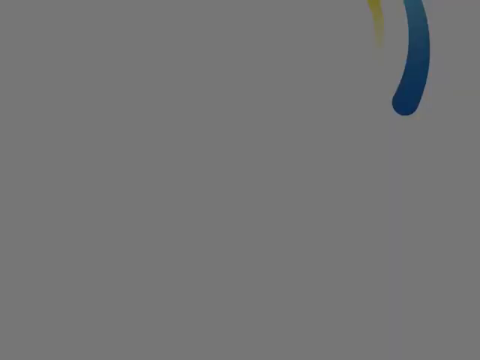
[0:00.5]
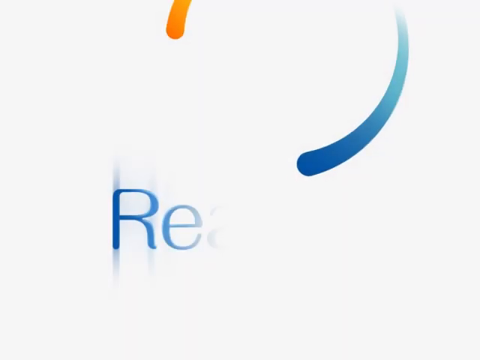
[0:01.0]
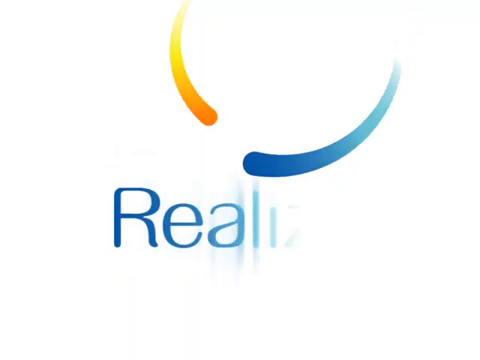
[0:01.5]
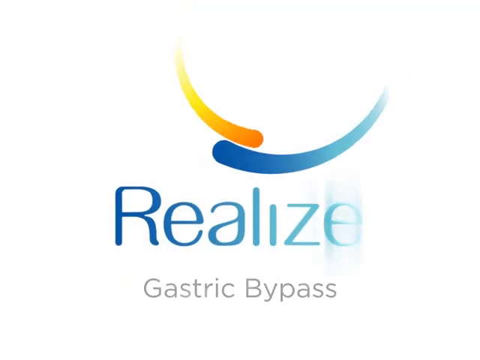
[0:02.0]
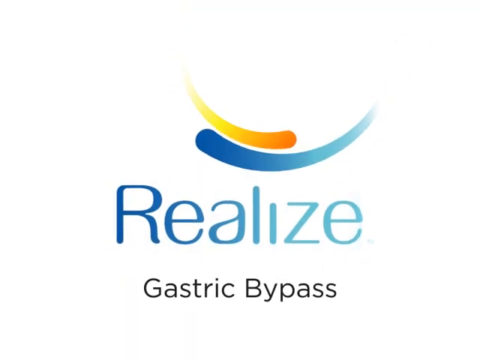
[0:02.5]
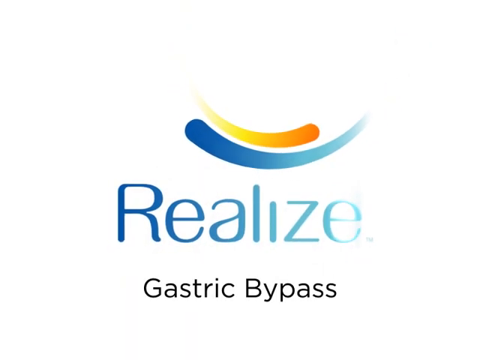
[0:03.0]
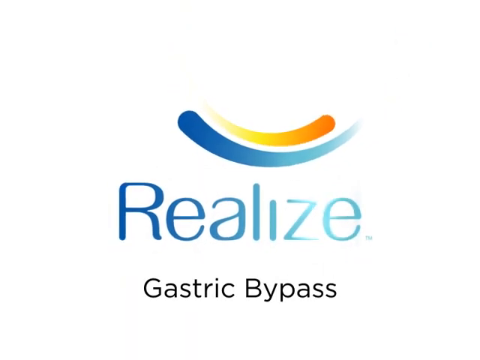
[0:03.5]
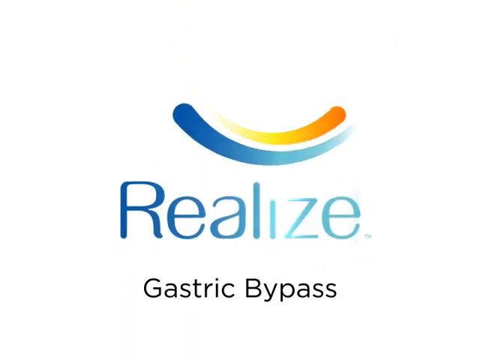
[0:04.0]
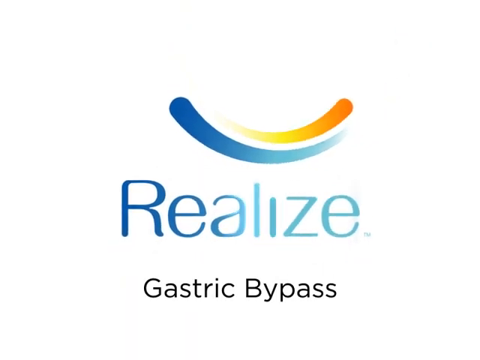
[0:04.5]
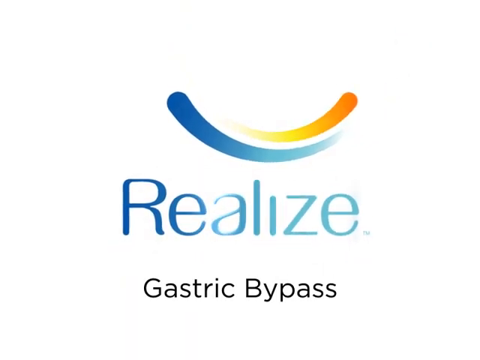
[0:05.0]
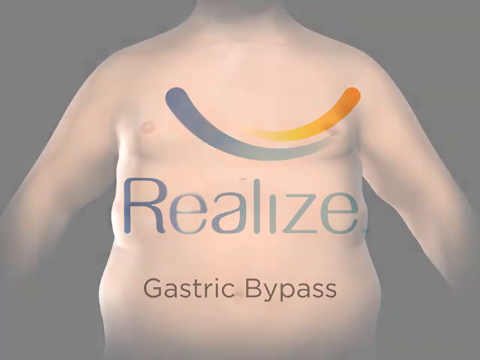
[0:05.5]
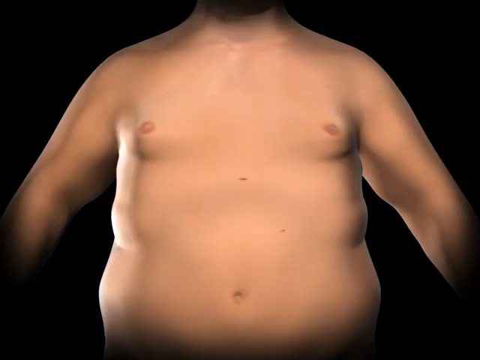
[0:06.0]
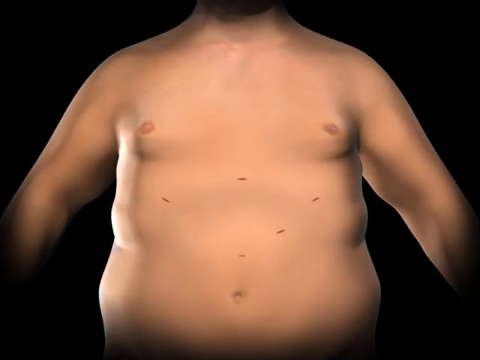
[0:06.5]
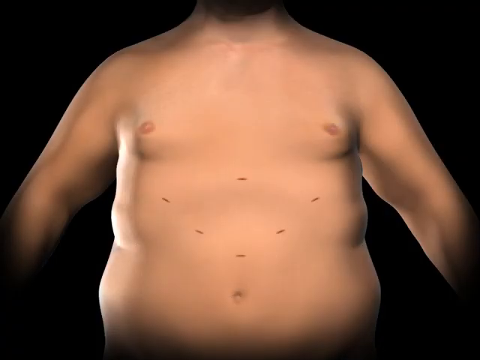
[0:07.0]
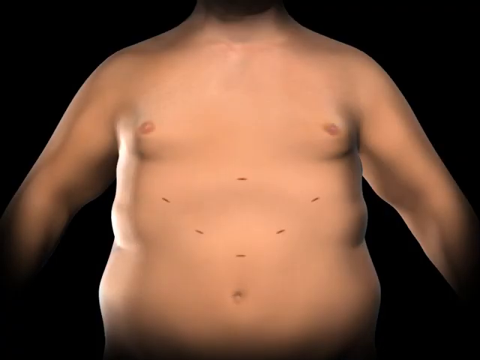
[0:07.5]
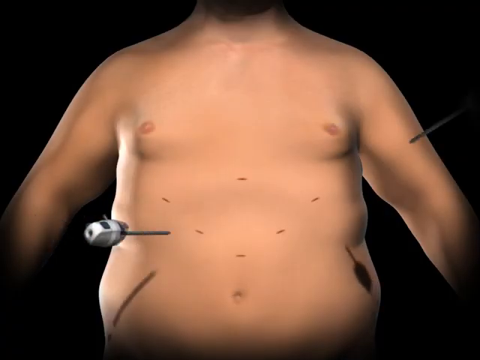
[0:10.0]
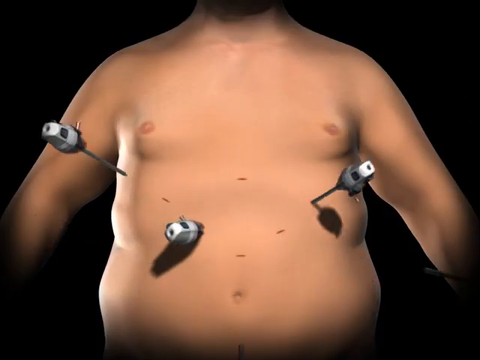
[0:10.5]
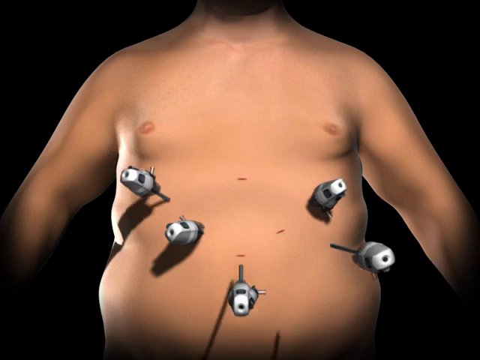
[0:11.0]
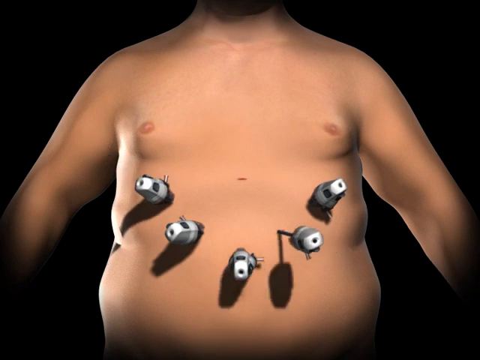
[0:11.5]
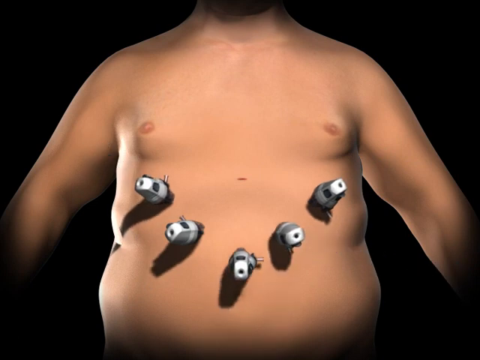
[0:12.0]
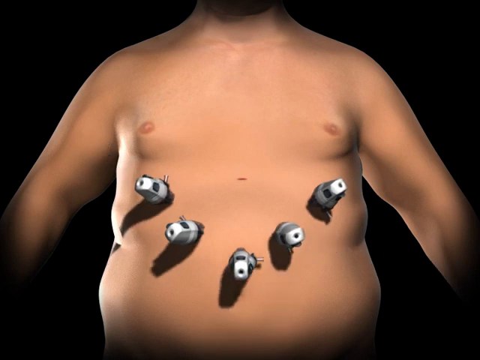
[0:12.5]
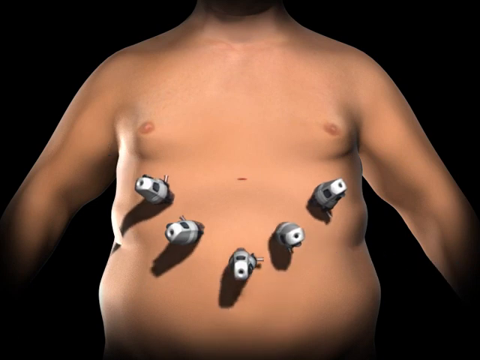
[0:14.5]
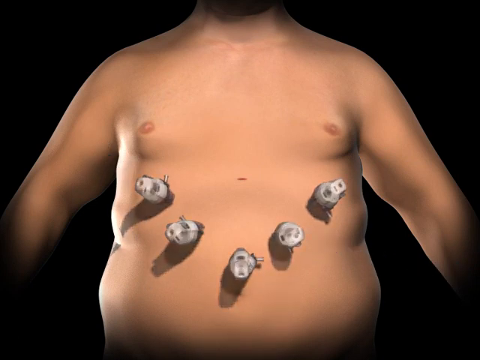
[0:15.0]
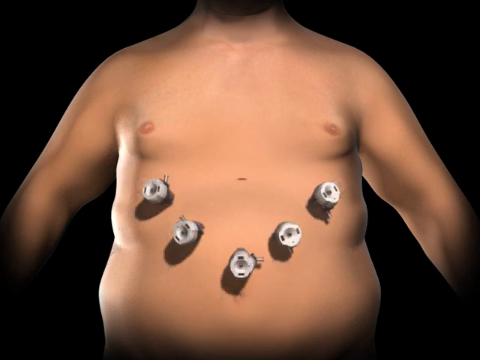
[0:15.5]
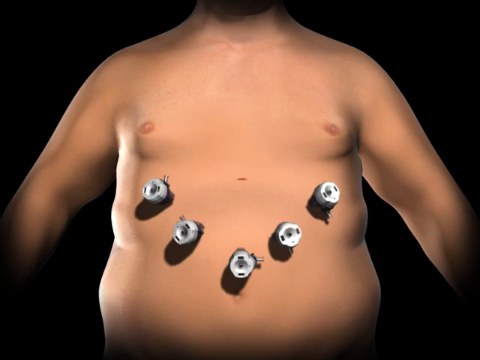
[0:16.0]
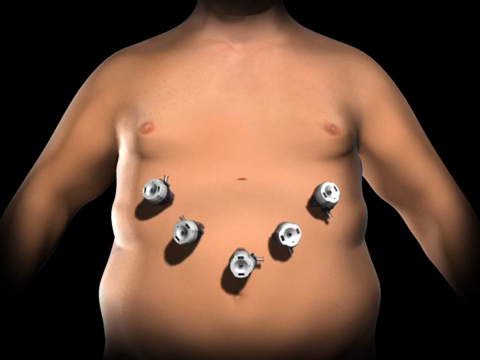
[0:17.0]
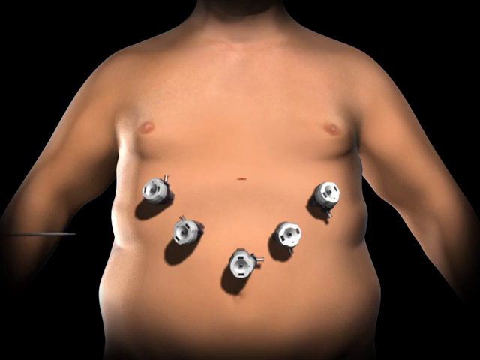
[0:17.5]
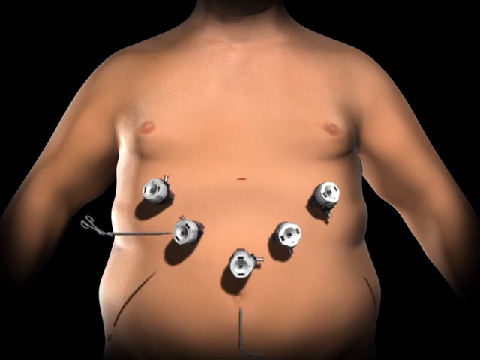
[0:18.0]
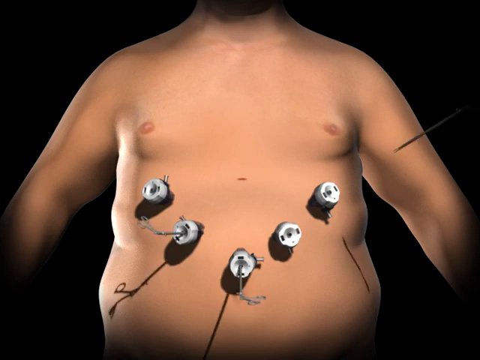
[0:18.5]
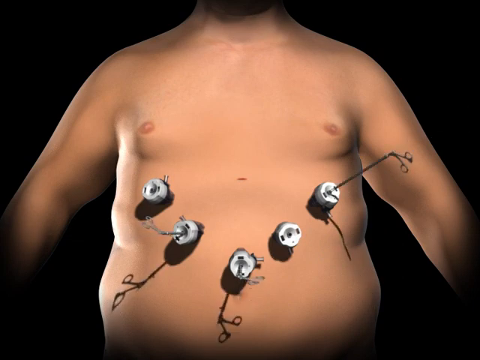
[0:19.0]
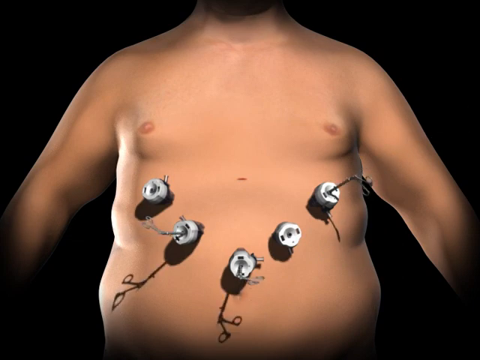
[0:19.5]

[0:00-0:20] Against a white background, an orangish-yellow, slightly circular curved line enters from the top left, and a blue circular curved line enters from the top right, below it. They meet in the center of the screen, slightly to the right. In the center, toward the bottom, "Realize" is written in blue, with "gastric bypass" below that. The lines continue to move: the orange-yellow one at the top moves toward the right, and the blue one at the bottom moves toward the left. The scene then changes to a black background with the image of a large, beige person shown from the neck down. The breast area and a large belly area are visible. There are lines on the belly: one going left to right below the sternum, two pointing to the left and right below it, two more pointing left and right below those, and one going left to right just slightly above the belly button. Together they are shaped almost like a triangle or an arrow pointing down. The arms are slightly away from the chest on both the left and right. Five silver, slightly gray handled objects with pointy tips enter the scene and go into the lines on the belly, except for the line at the top. The scene then flips to the silver-gray objects without their handles; their tops are circular. Silver objects that look like bent scissors are inserted into two of these objects: the one on the top right and the one to the left of the bottom line.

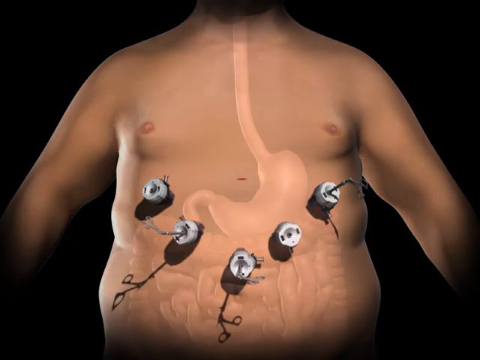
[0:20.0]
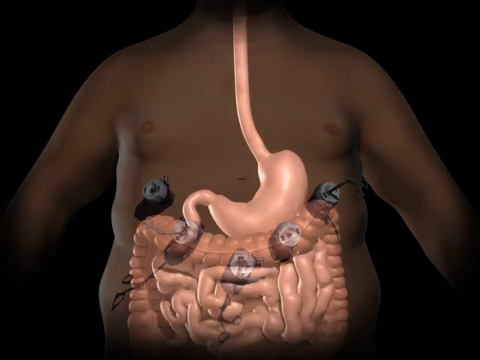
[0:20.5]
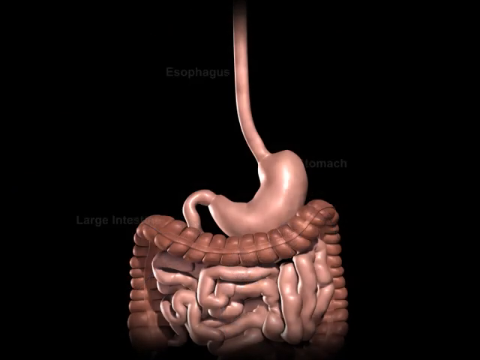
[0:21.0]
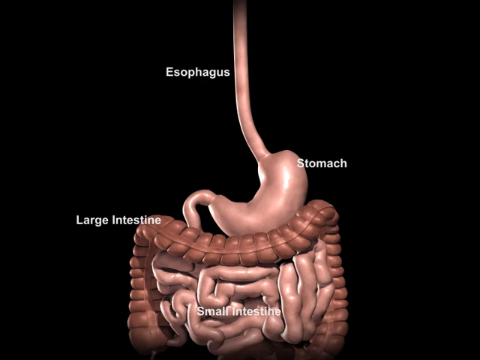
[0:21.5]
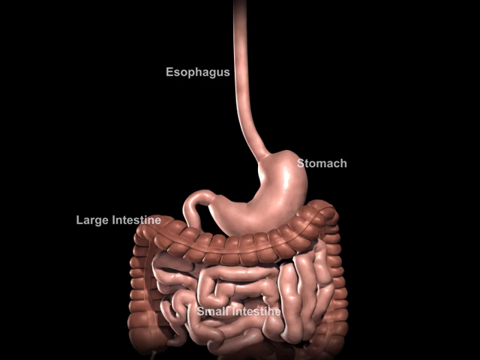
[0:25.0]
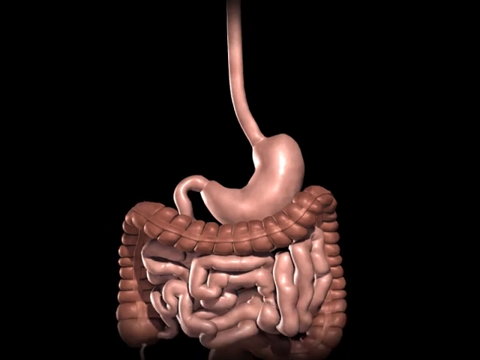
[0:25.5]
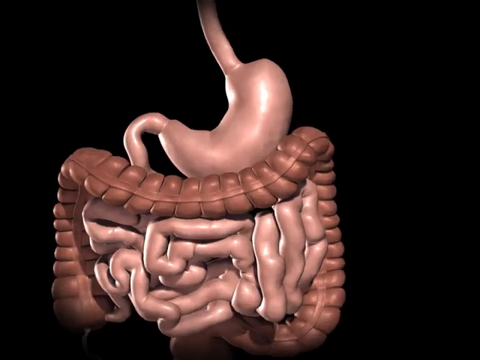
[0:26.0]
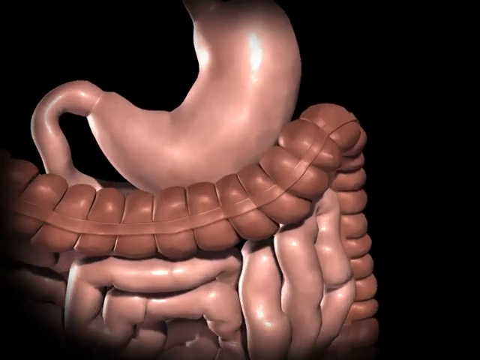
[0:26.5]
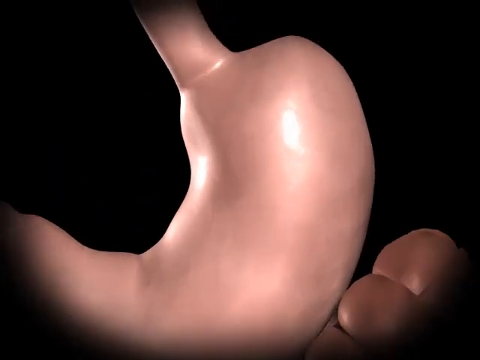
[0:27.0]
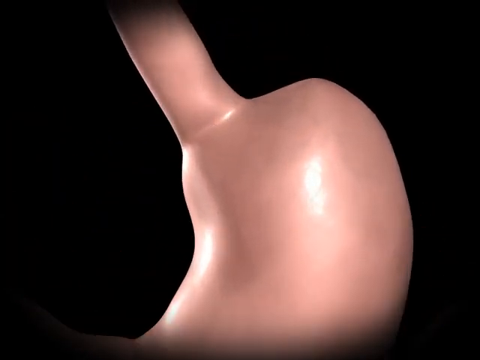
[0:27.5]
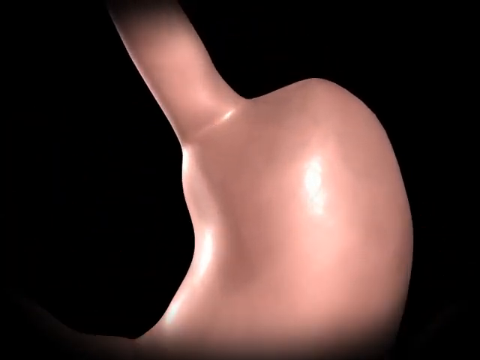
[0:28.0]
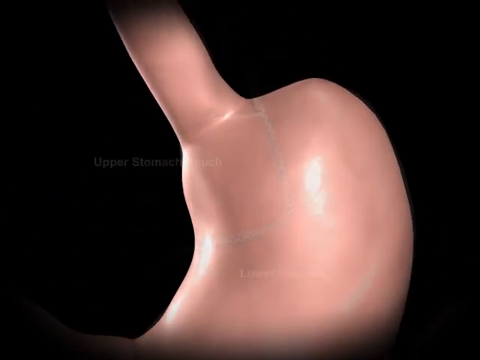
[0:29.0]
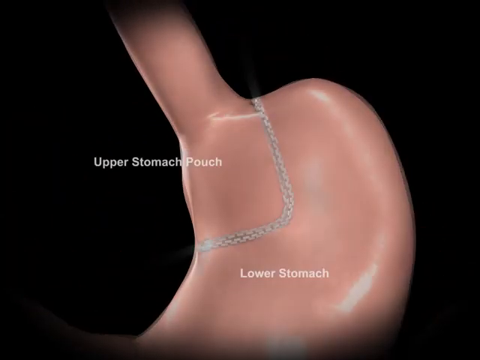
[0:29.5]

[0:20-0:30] A beige person stands in front of a black background. A pink silhouette of the inside of the body leads from the esophagus to the stomach and into the intestines, with the stomach on the right. Circular silver objects are attached to the skin of the belly area. There is a really small line just below the sternum going left to right, with two lines on the left and right adjacent to it. Further down, in a V shape, there are two more circular silver objects, and one is directly below the one under the sternum, just above the belly button area. Curved, scissor-shaped objects poke out from three of the silver circular objects: the one at the bottom, the one at the top right, and the second one going down on the left. The scene then changes to an image of the digestive system in front of a black background. A pink esophagus, a tube running from top to bottom, is at the top center of the screen. A curved, bean-shaped stomach sits on top of a brown large intestine that goes down on the sides, and a group of pink intestines is labeled "small intestine". The top of the large intestine is pushed down, and it has indentations throughout that make it look like a line of connected sausages. The view zooms in to the stomach area. A white, square, zipper-like object is in the corner where the stomach and esophagus meet; its vertical part runs through the upper center of the stomach and its bottom part goes to the left, splitting the stomach into quarters. The bottom is labeled "lower stomach".